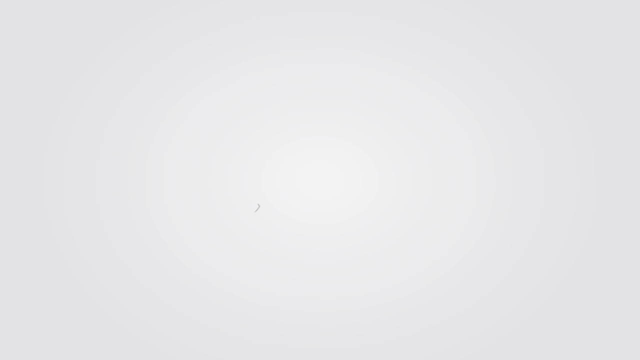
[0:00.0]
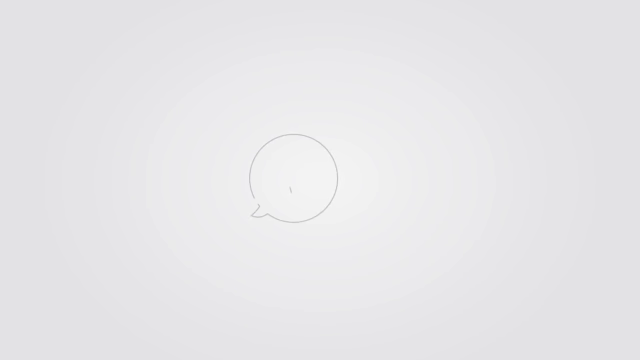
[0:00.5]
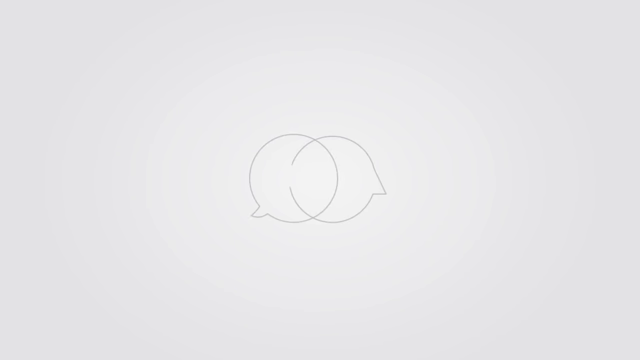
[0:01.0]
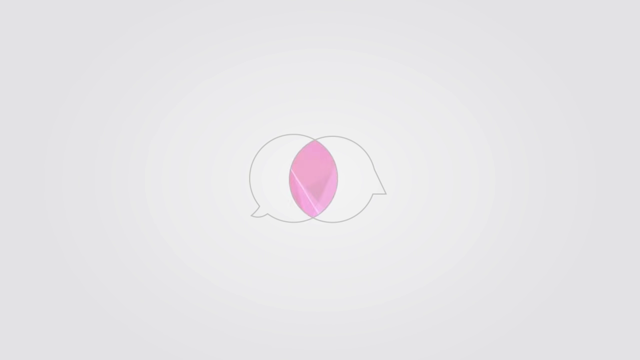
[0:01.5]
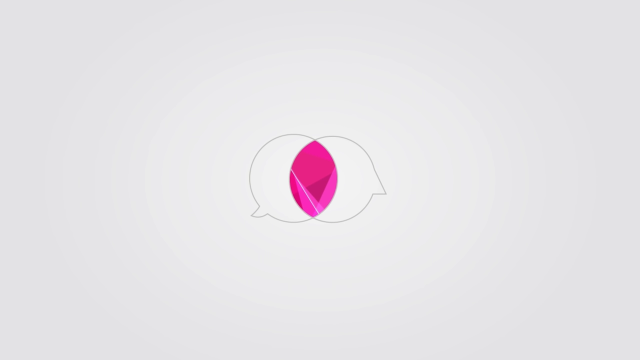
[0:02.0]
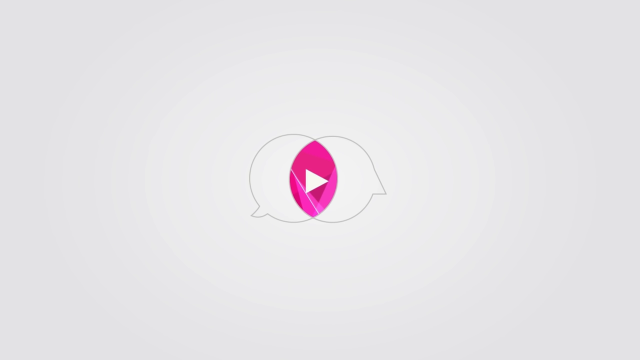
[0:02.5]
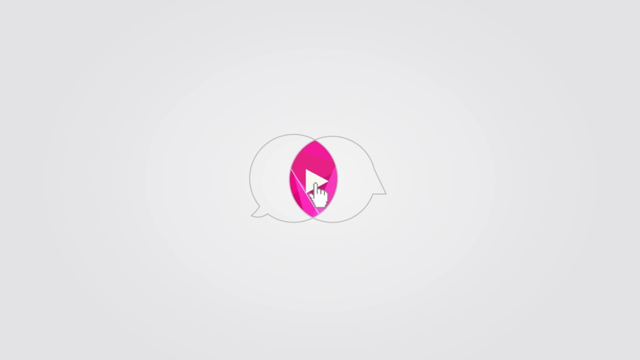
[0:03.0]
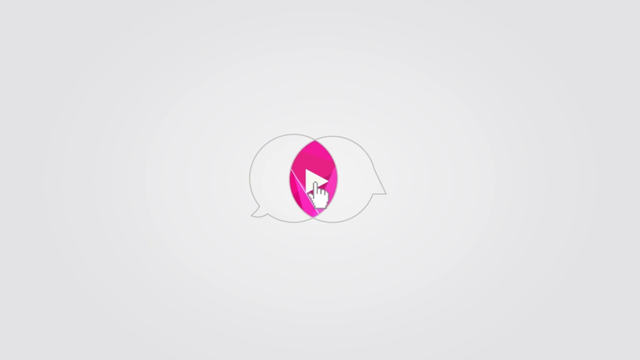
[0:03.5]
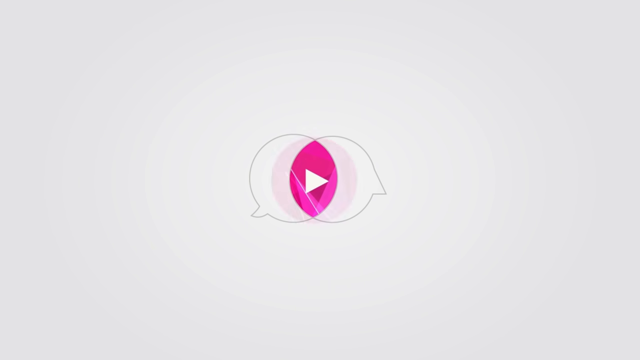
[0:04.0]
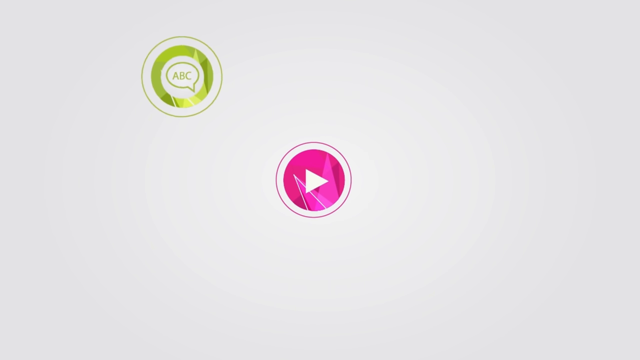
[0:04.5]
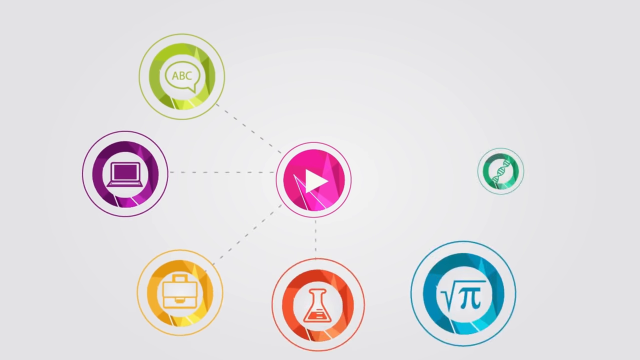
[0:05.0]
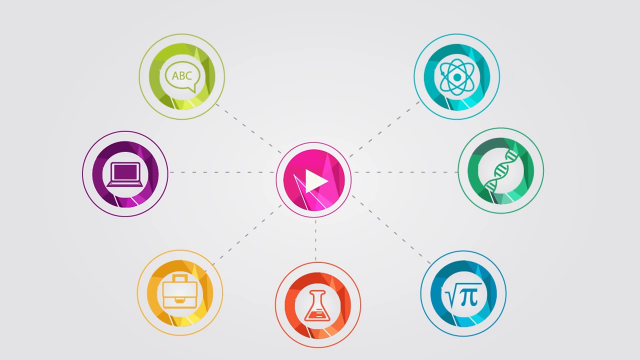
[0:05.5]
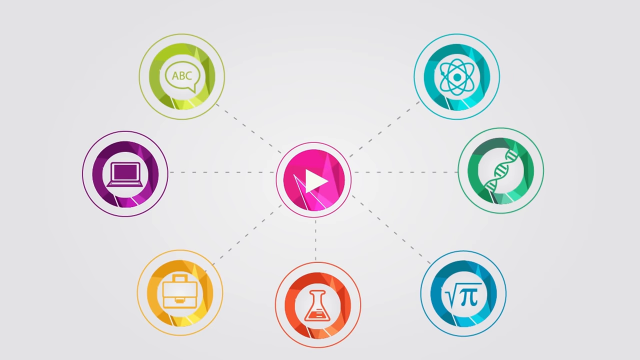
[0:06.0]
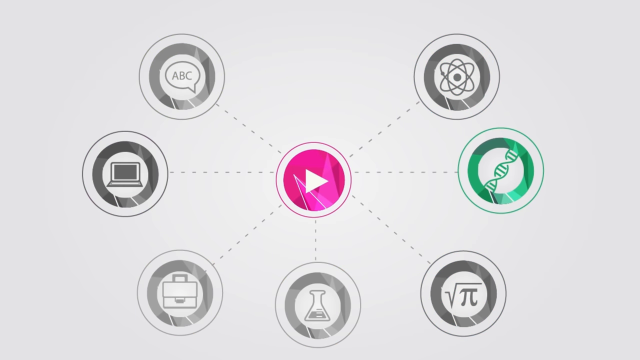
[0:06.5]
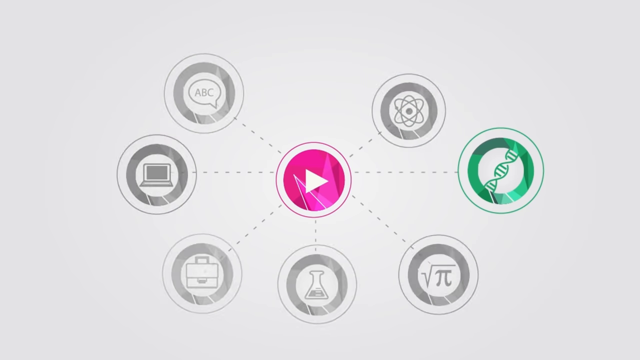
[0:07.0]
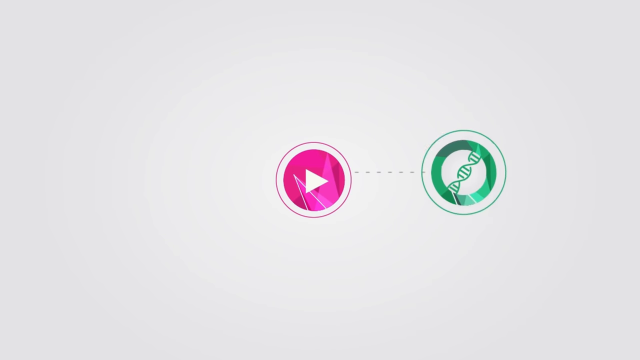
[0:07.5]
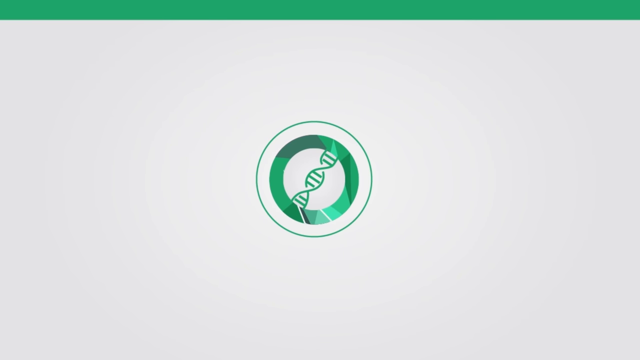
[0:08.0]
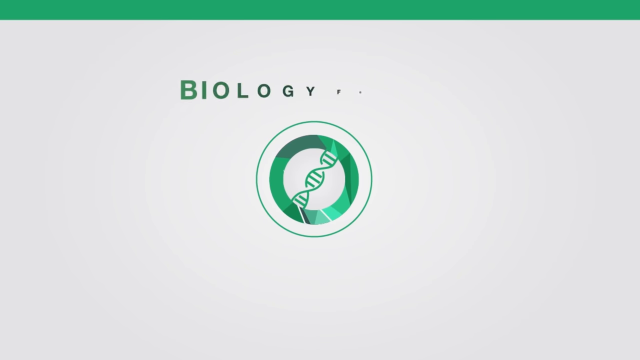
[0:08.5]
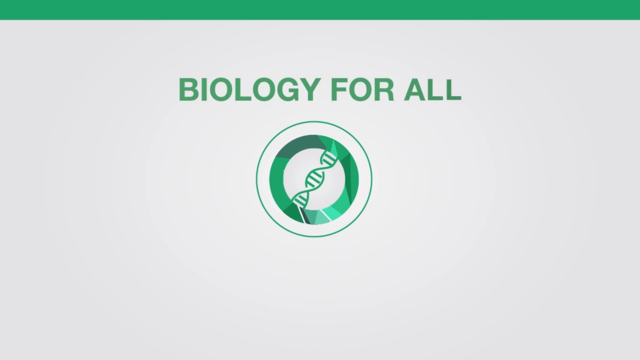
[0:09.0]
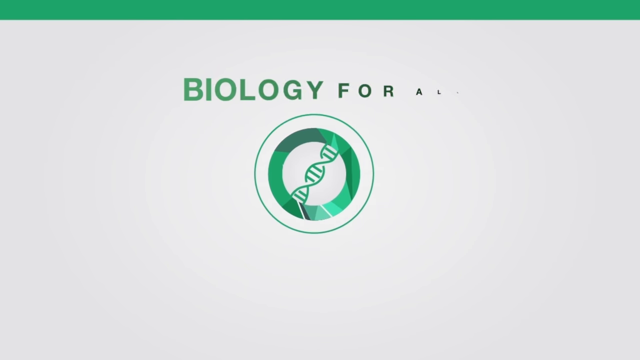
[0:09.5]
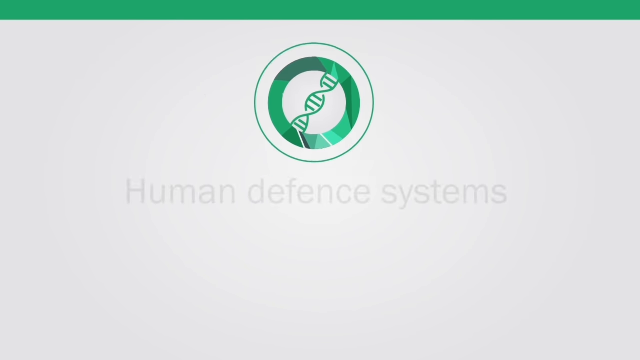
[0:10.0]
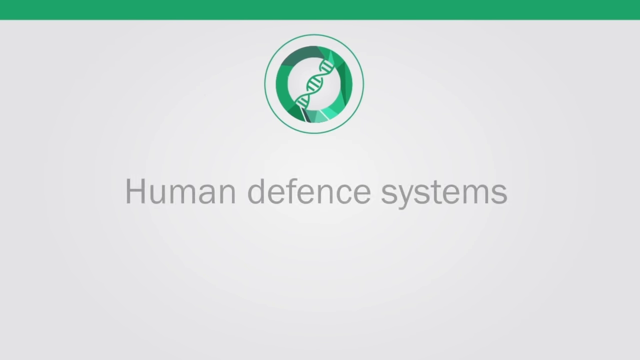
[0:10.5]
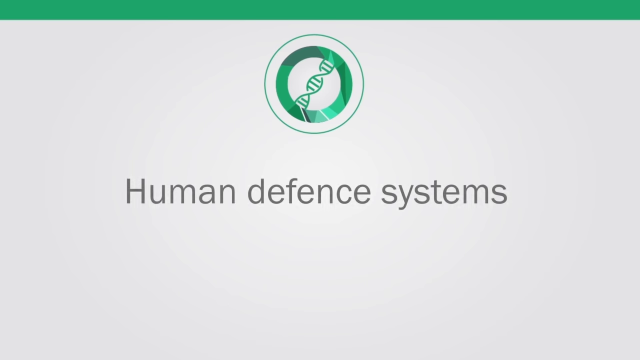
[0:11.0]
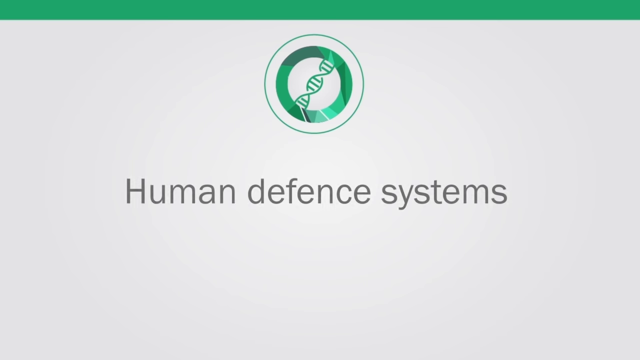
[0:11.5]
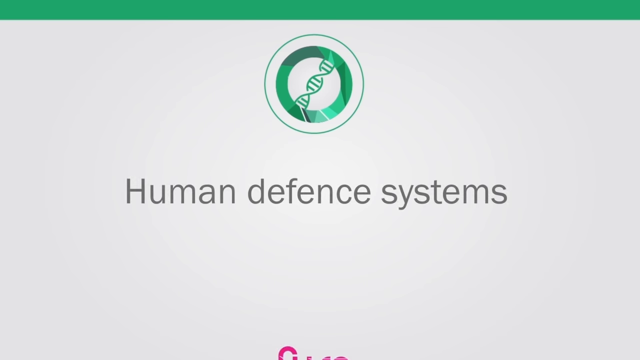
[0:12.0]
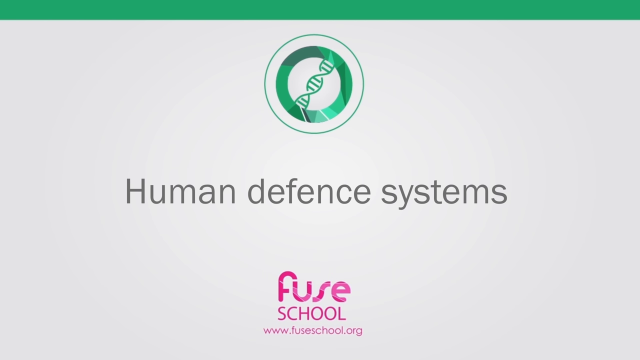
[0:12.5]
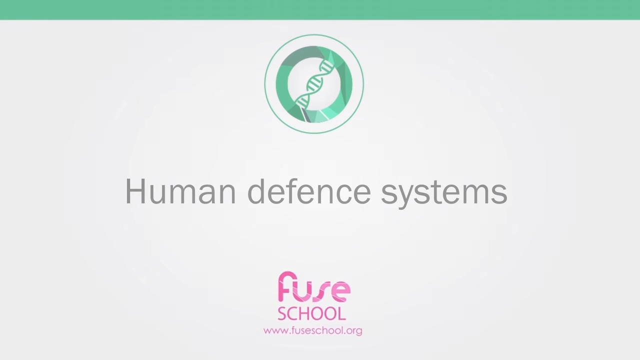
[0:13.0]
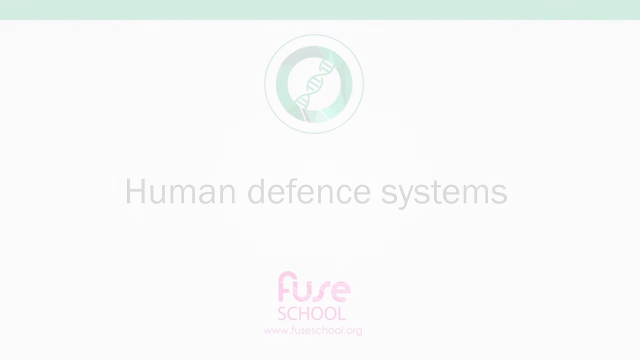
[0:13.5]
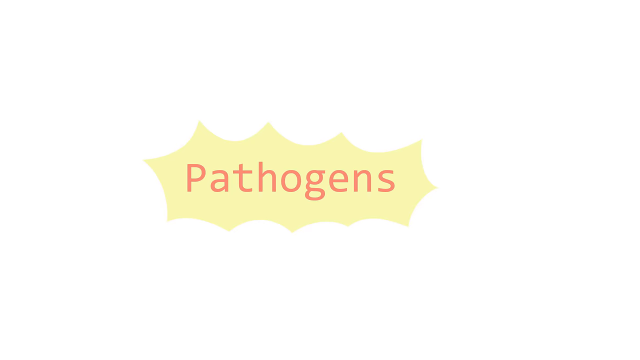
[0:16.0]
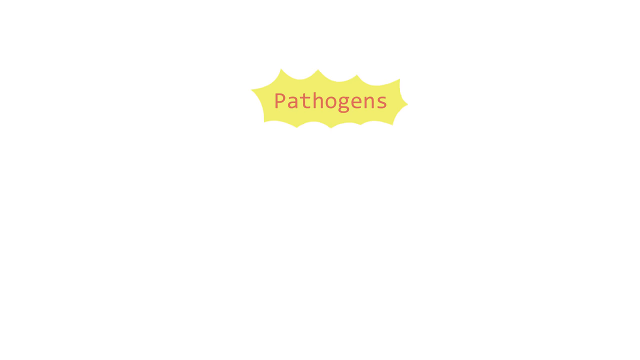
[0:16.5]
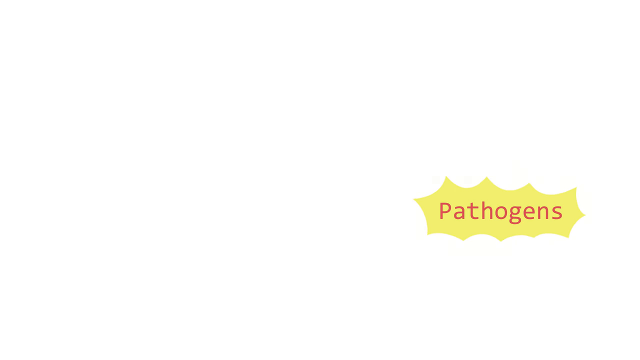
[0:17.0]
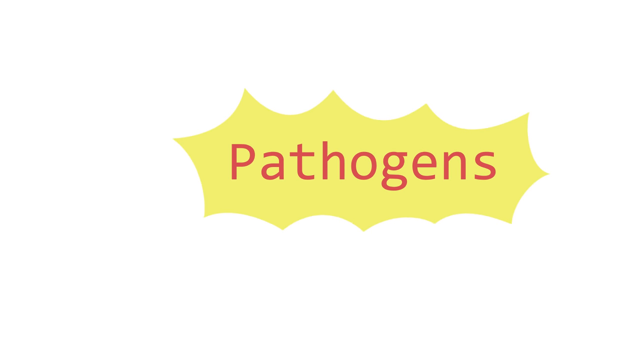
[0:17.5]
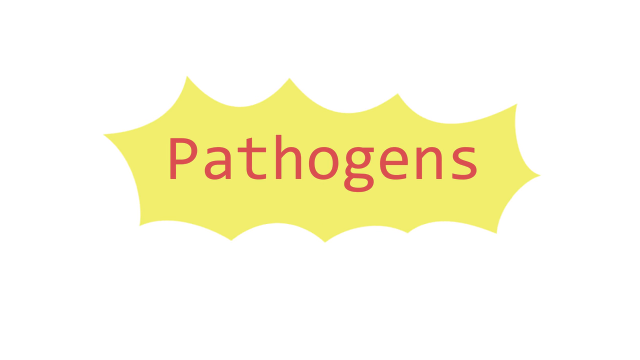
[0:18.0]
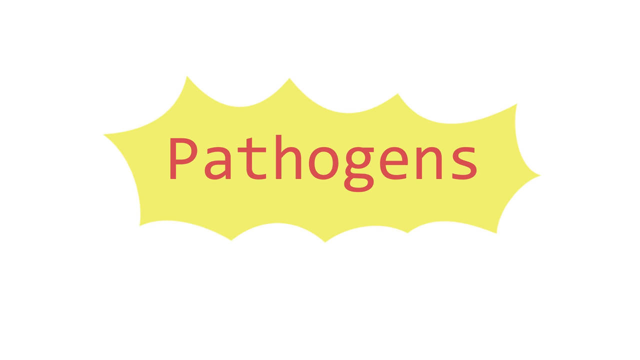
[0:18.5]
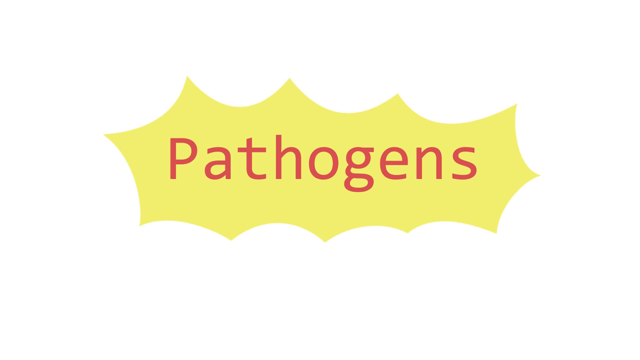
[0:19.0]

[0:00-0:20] Circles appear, then two pink circles in the middle of them, and then they spread. Things that look like DNA, experiments and a mathematical computer are shown. The video then moves on to biology for the human defense systems. The word "pathogens" is written in red on a bubble colored dark bright yellow. Many different colors are used together.